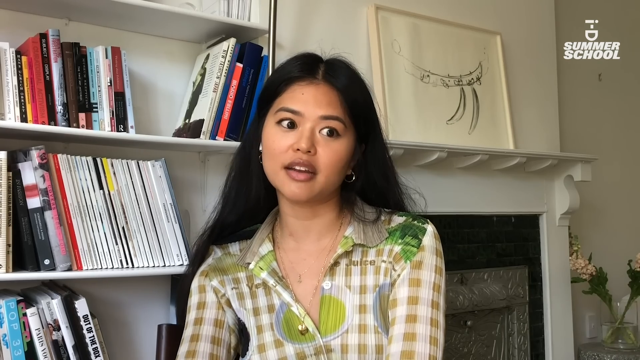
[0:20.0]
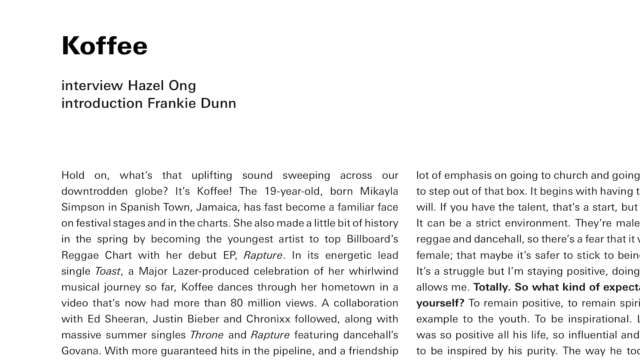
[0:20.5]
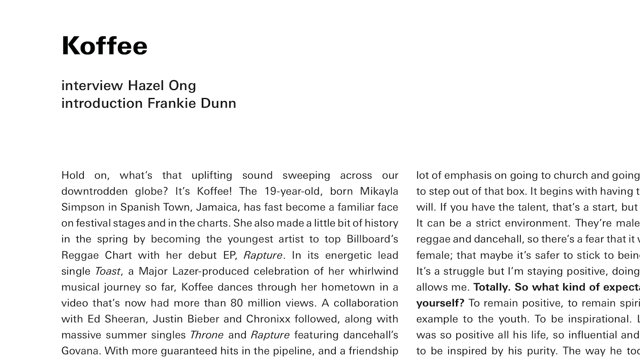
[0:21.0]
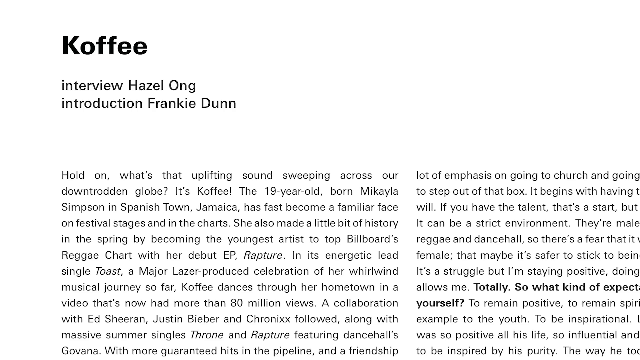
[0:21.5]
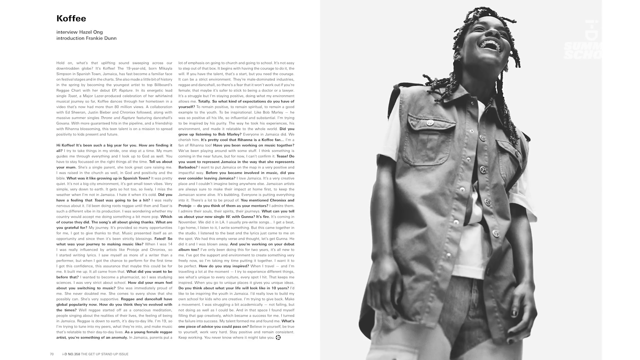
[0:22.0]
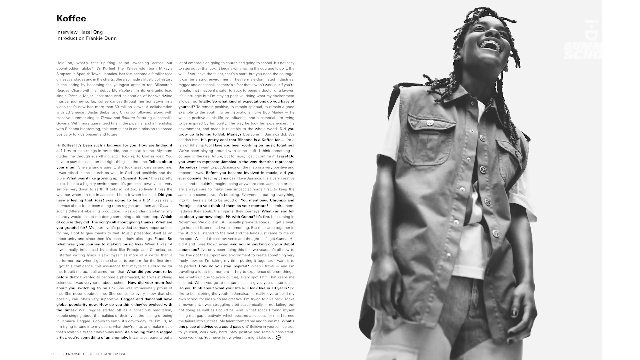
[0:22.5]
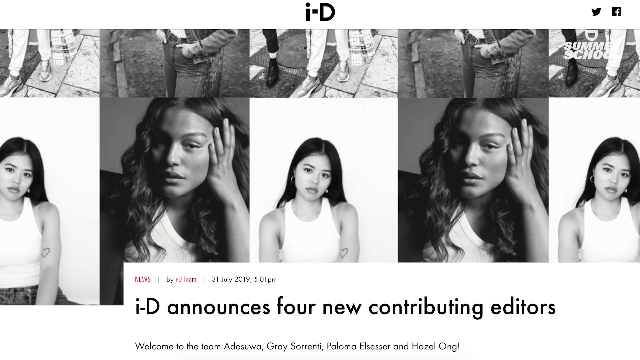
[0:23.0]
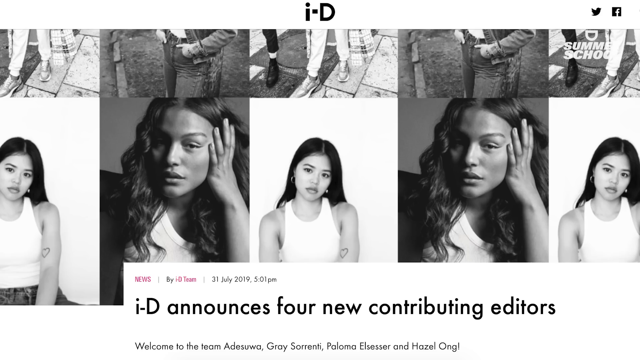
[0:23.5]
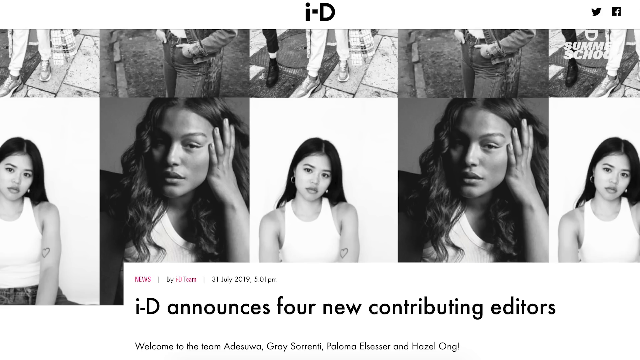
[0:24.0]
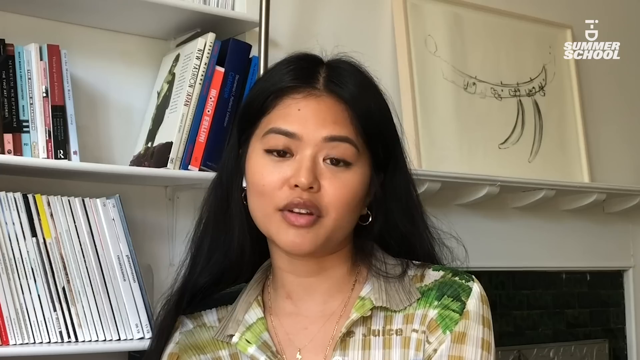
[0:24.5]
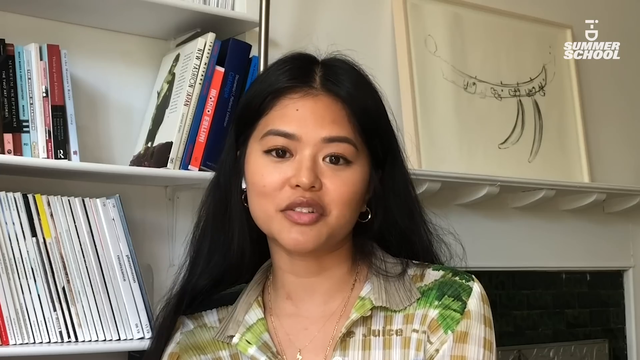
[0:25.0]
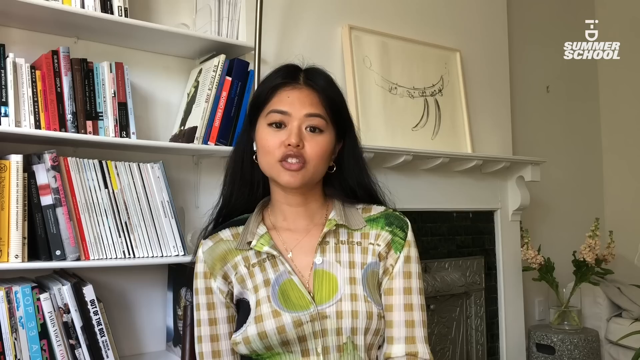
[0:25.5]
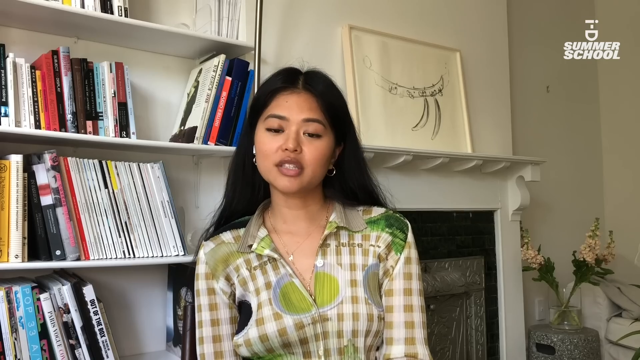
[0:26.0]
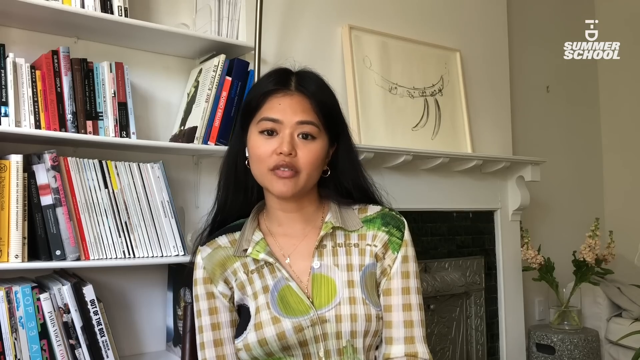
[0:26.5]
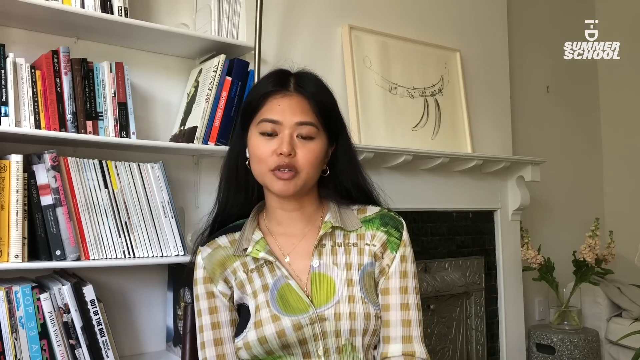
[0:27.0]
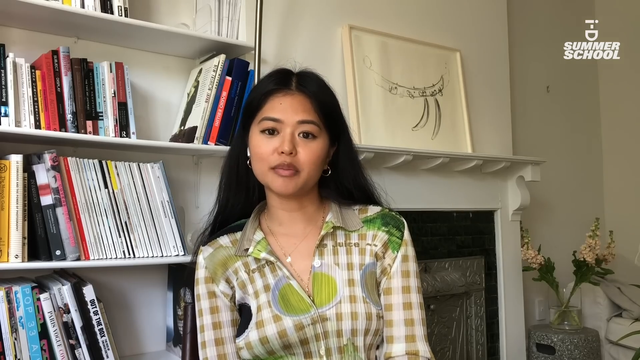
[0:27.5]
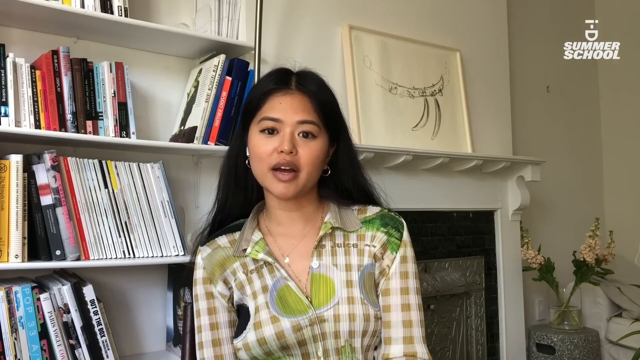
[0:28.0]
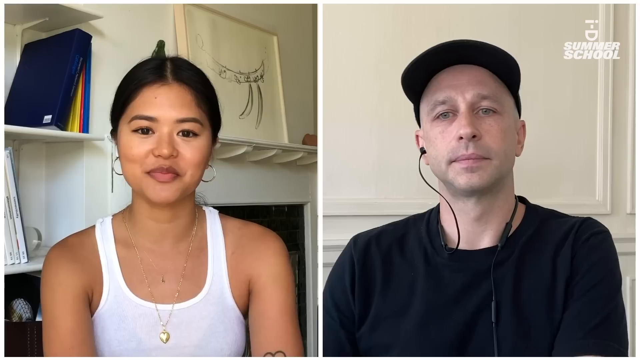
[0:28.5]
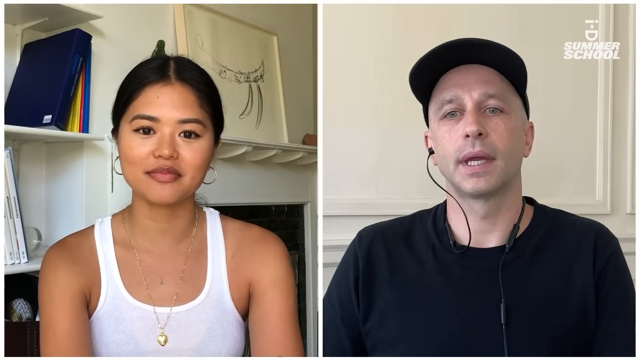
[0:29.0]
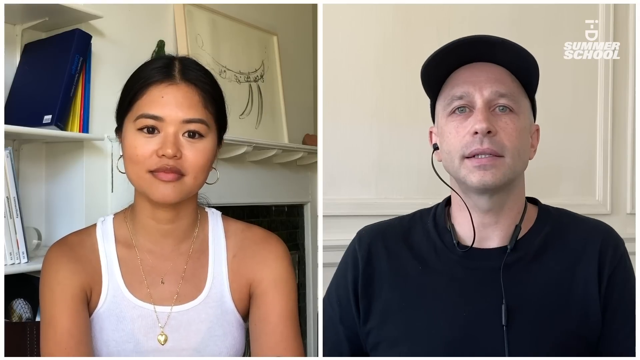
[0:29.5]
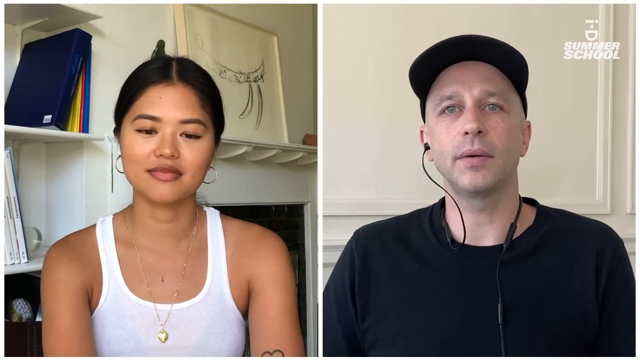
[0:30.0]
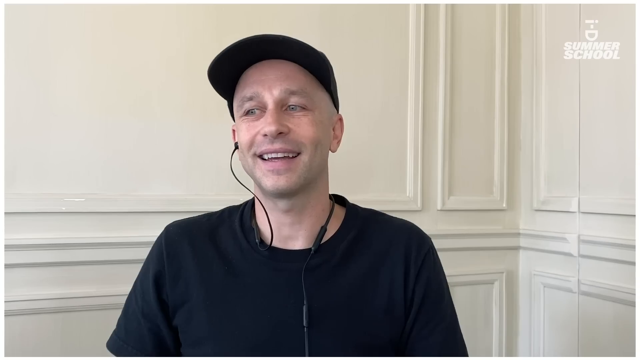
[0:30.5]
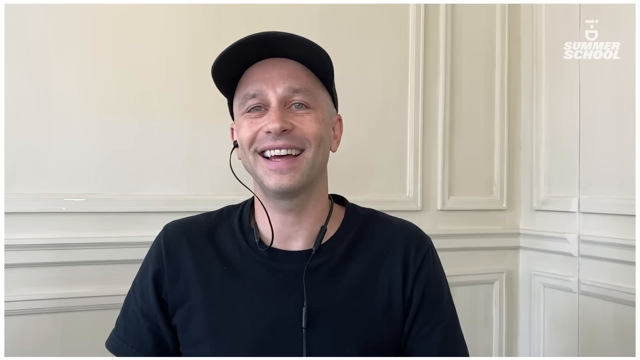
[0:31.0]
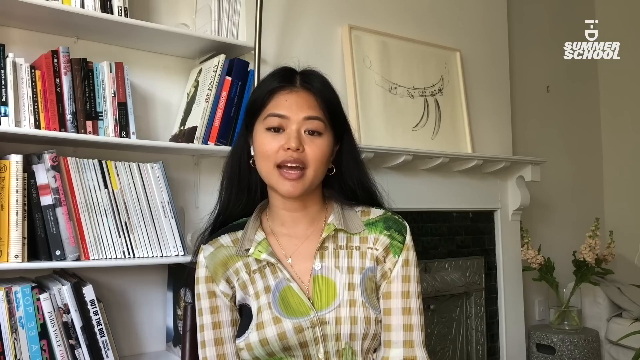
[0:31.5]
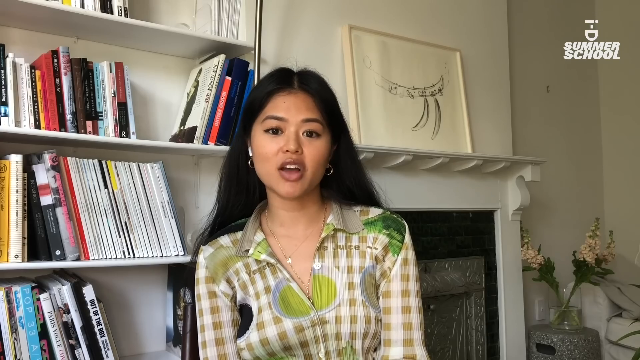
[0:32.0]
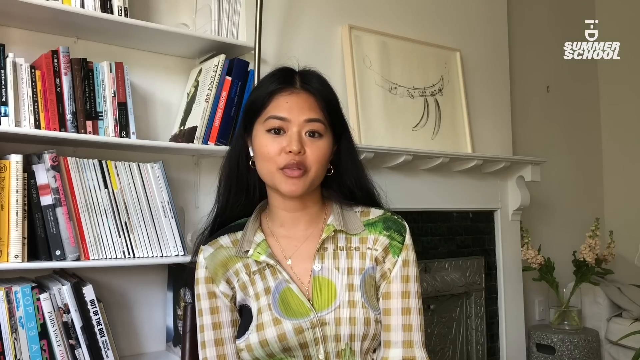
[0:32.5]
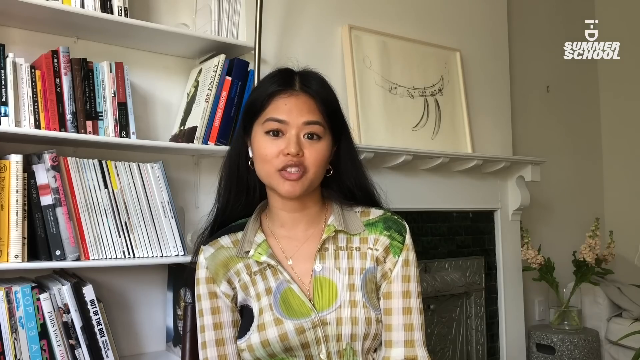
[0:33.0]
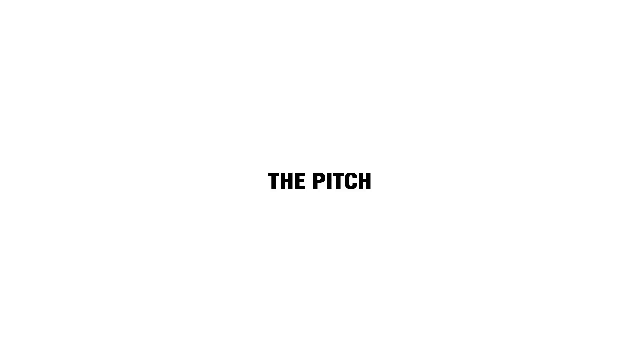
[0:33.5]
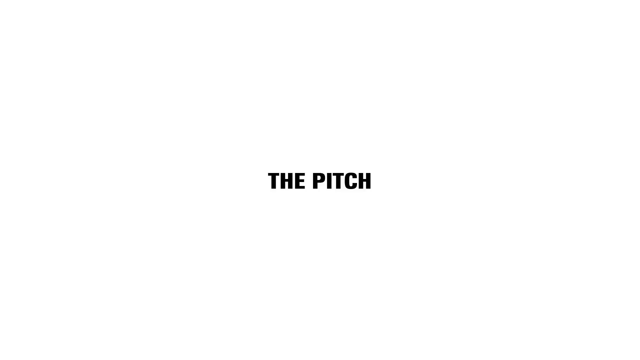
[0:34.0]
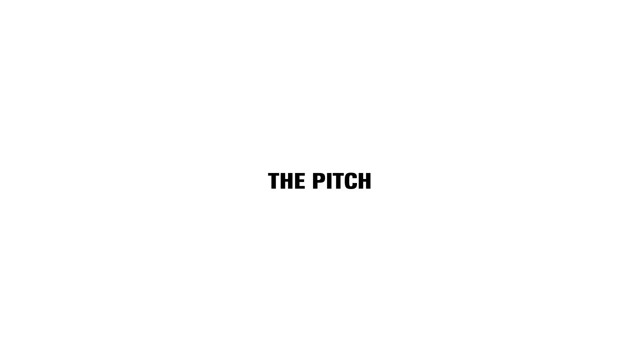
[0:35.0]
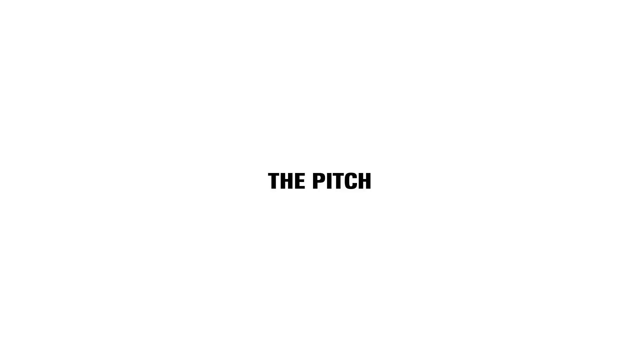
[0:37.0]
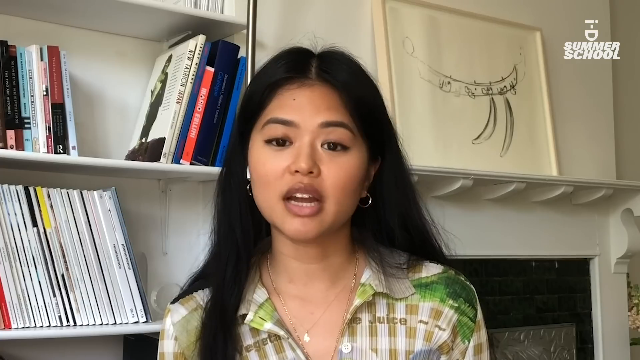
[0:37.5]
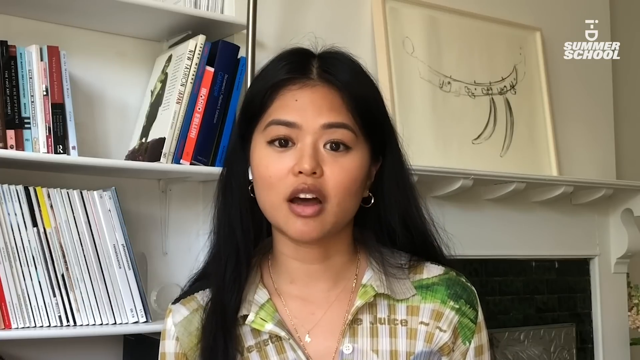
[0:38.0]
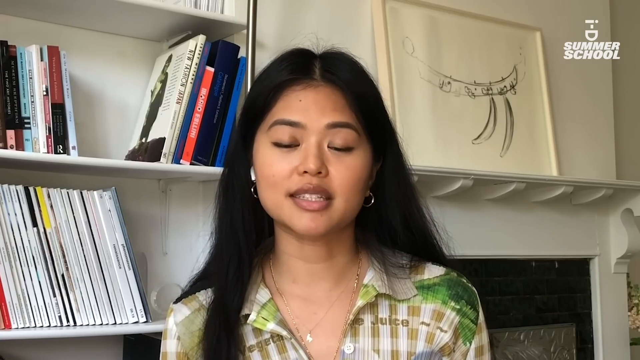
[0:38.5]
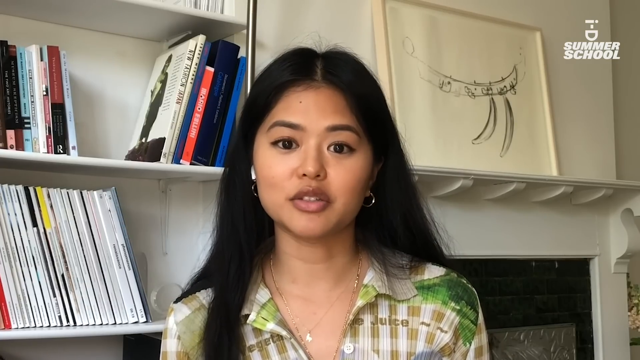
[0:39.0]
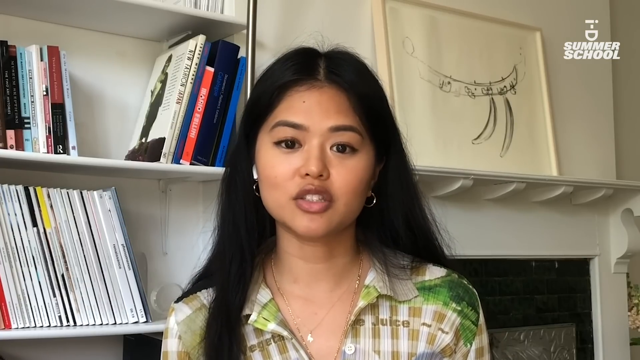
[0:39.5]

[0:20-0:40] A page of writing fills the screen. In the top left corner is the word "KOFFEE"; underneath it reads "interview, Hazel Ong," and below that "introduction, Frankie Dunn." To the left of the sheet is a picture of a black man with dreadlocks, wearing jeans, a white short-sleeved shirt, and an unbuttoned sleeveless button-up shirt. The video cuts to a screen with five pictures on top and five on the bottom, showing women models staring into the camera. It then cuts to an Asian woman talking into the camera, wearing a long-sleeve button-up shirt that is olive green and white checkered with different green designs on it. Behind her is a bookshelf with books on the shelves, and to her left is a fireplace with art hanging above it.